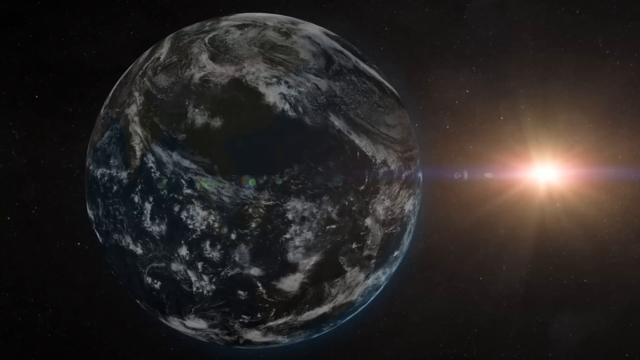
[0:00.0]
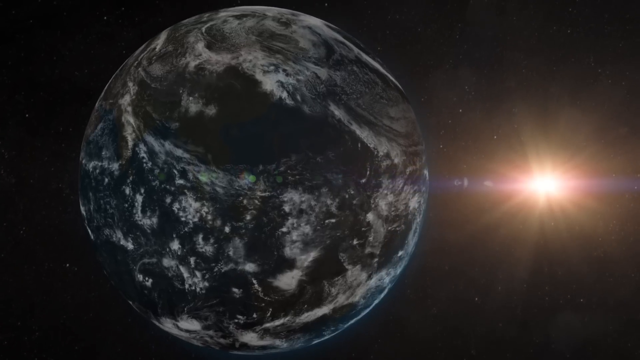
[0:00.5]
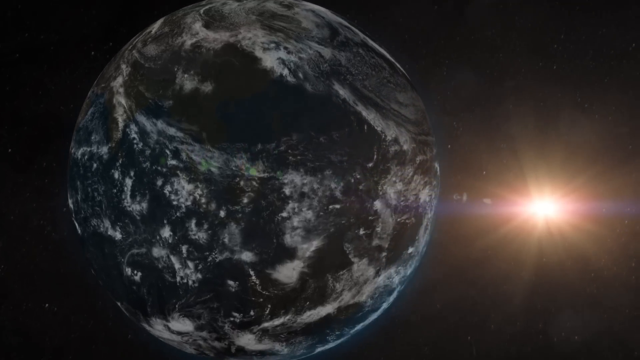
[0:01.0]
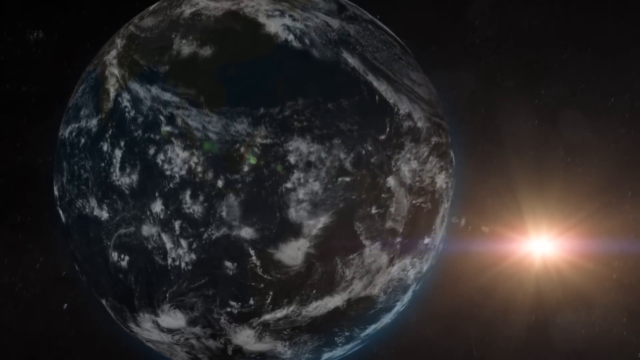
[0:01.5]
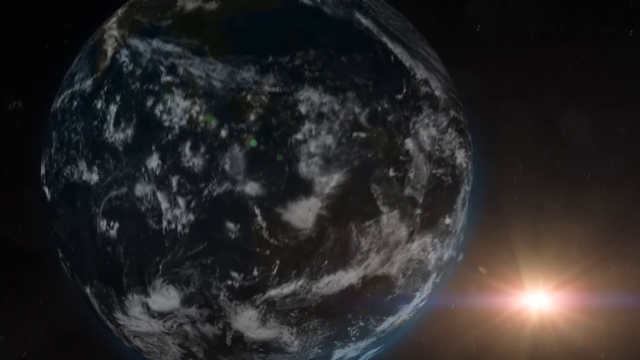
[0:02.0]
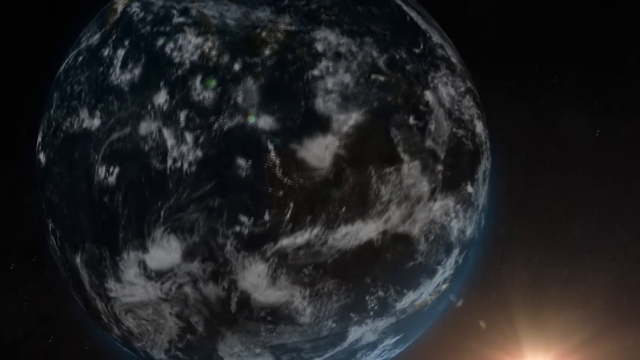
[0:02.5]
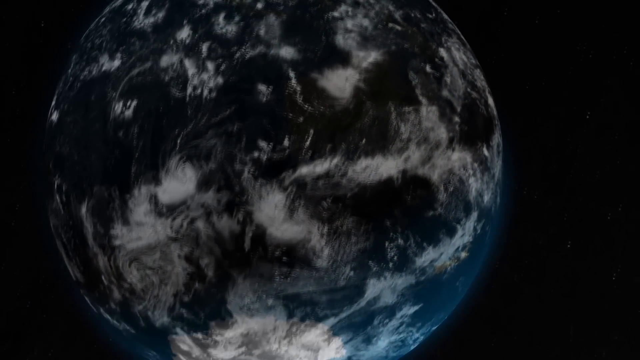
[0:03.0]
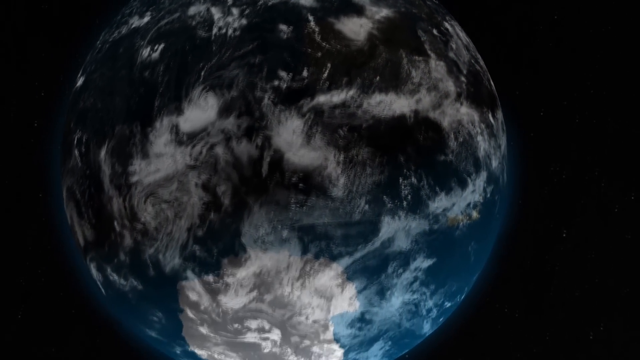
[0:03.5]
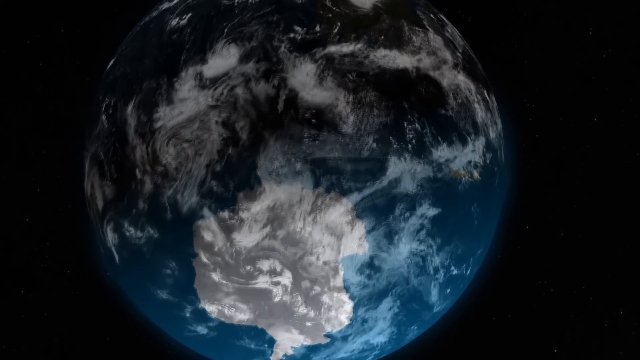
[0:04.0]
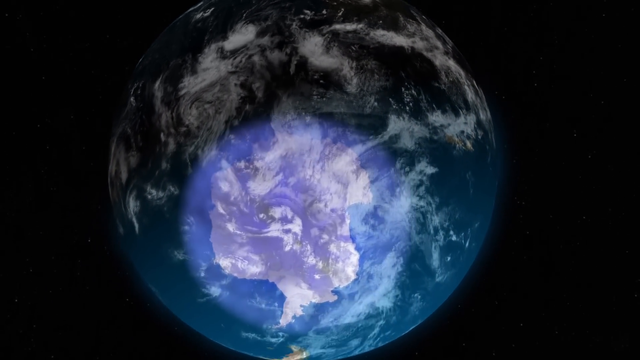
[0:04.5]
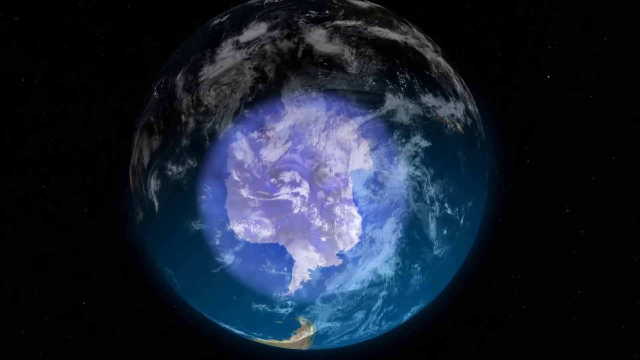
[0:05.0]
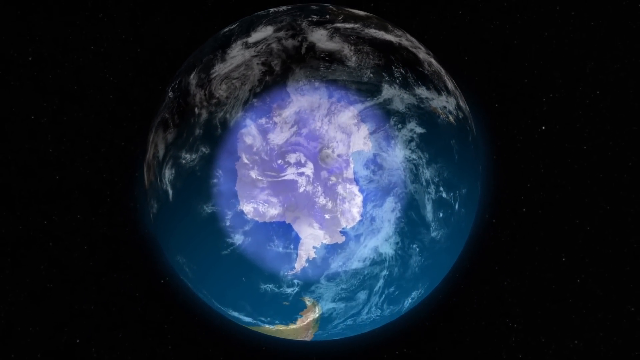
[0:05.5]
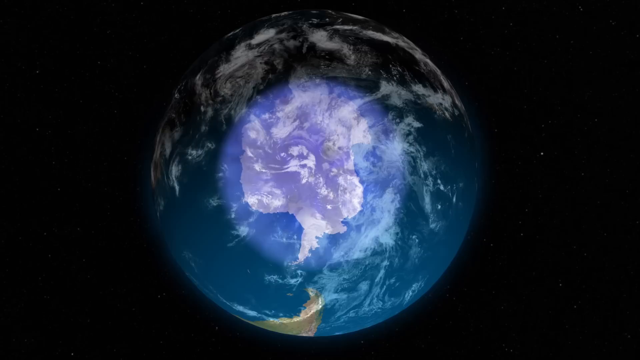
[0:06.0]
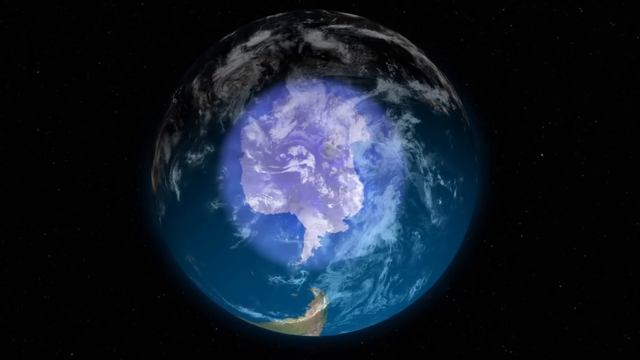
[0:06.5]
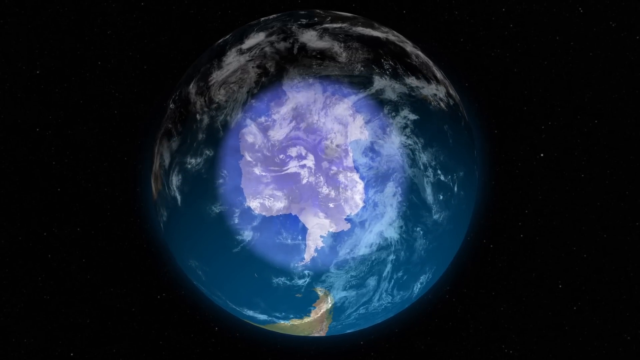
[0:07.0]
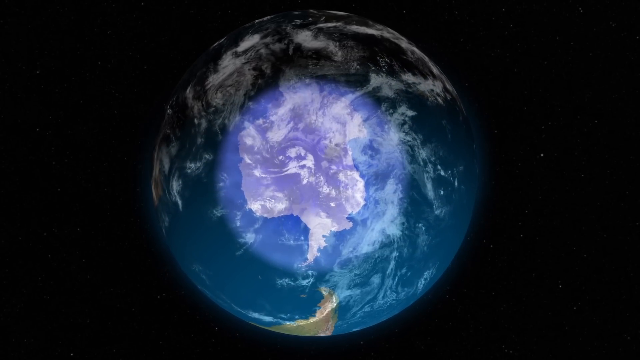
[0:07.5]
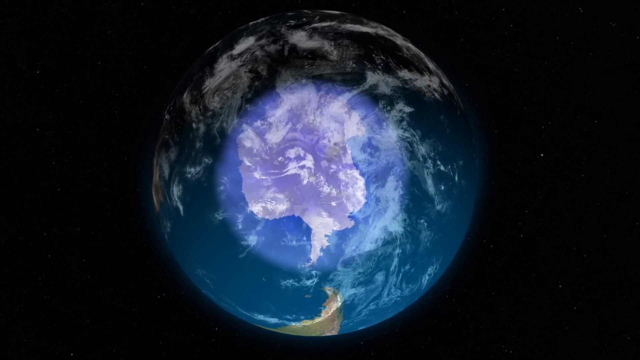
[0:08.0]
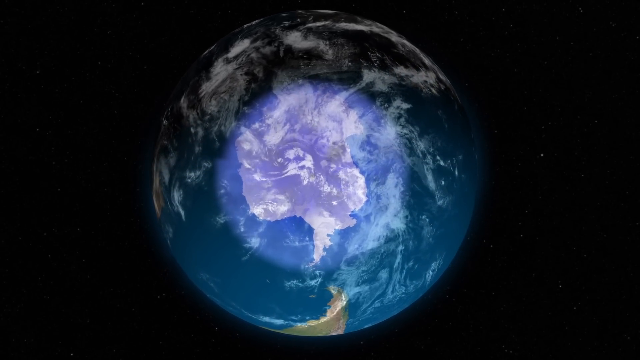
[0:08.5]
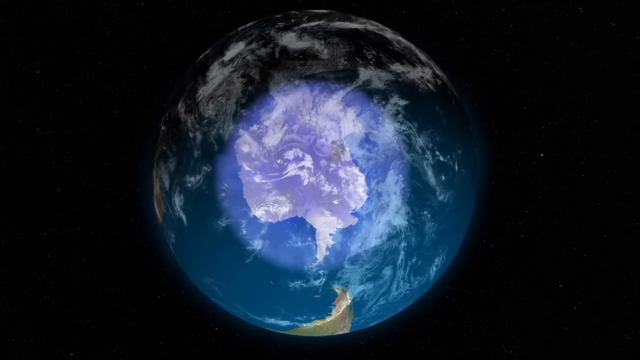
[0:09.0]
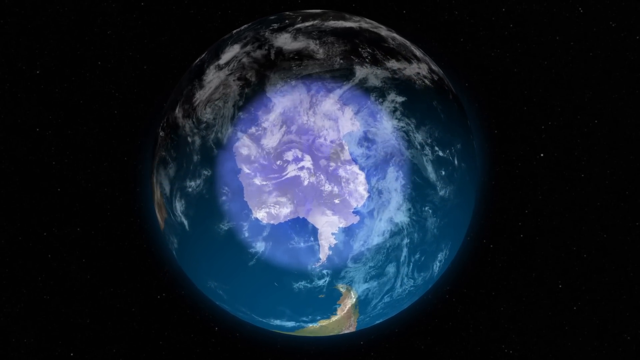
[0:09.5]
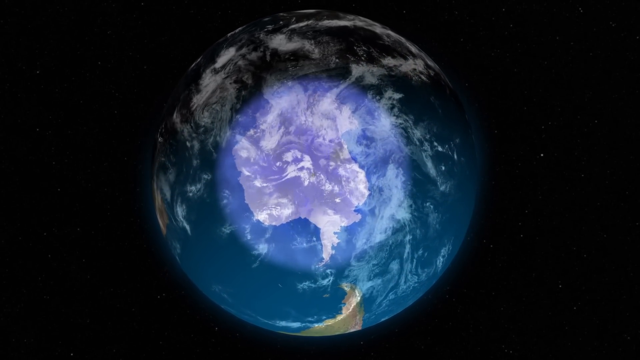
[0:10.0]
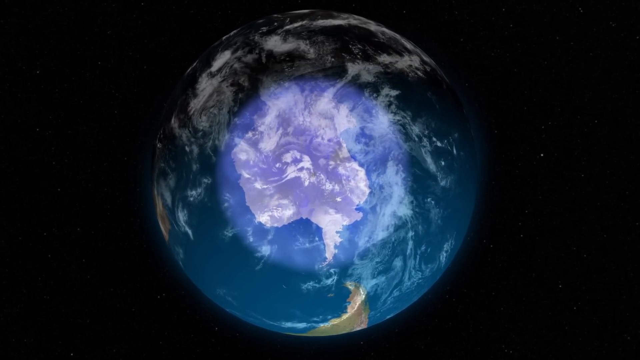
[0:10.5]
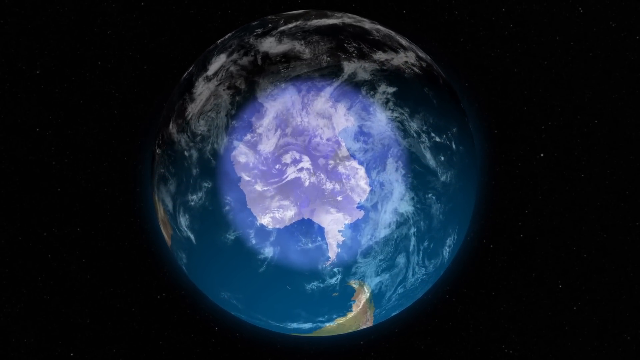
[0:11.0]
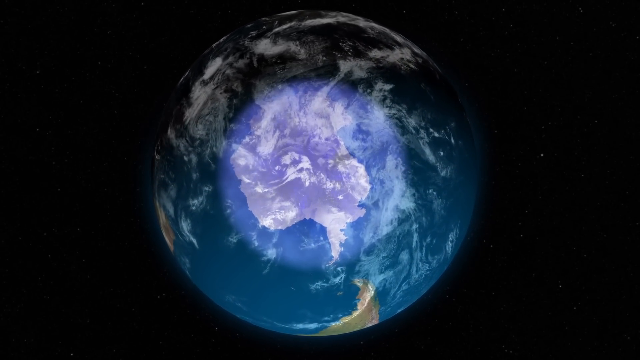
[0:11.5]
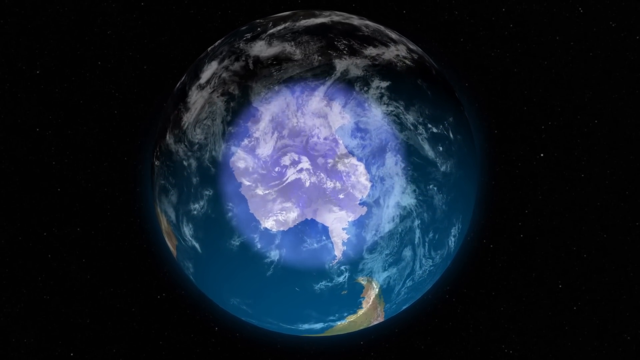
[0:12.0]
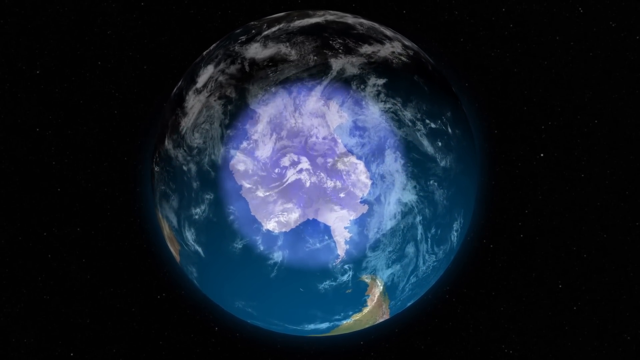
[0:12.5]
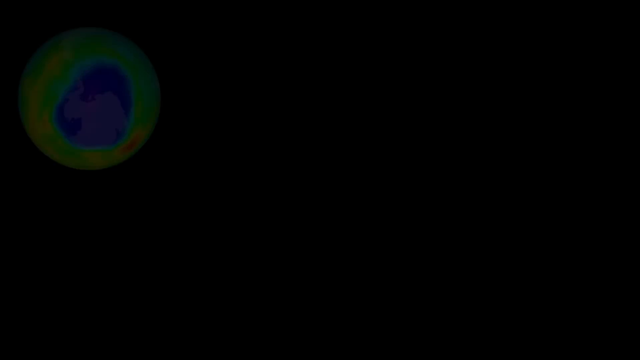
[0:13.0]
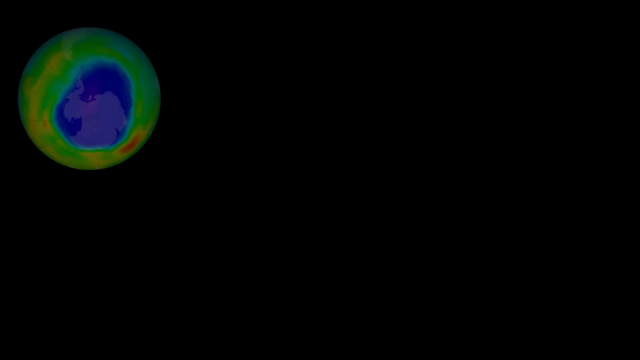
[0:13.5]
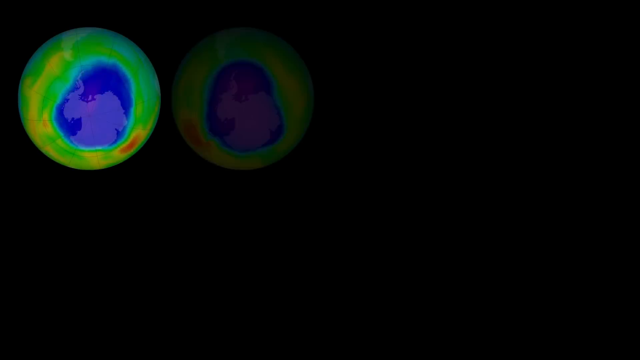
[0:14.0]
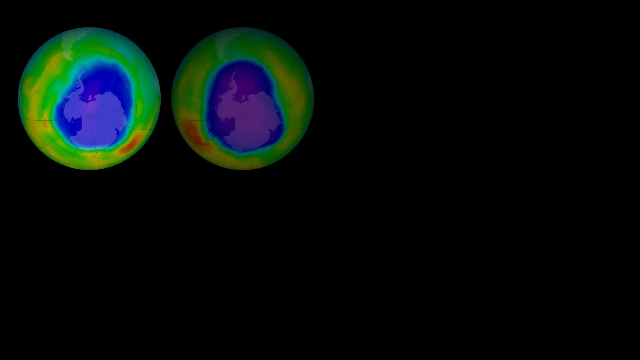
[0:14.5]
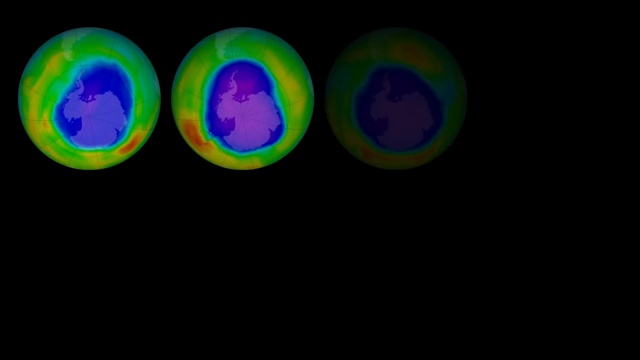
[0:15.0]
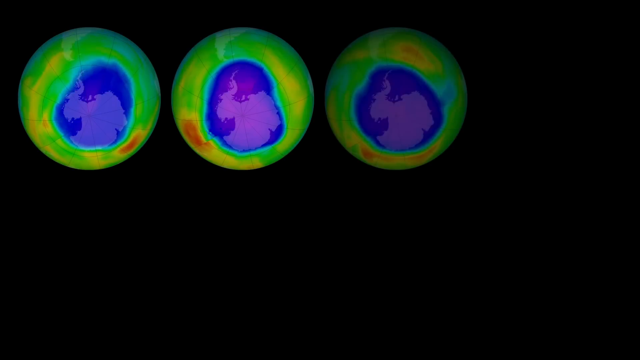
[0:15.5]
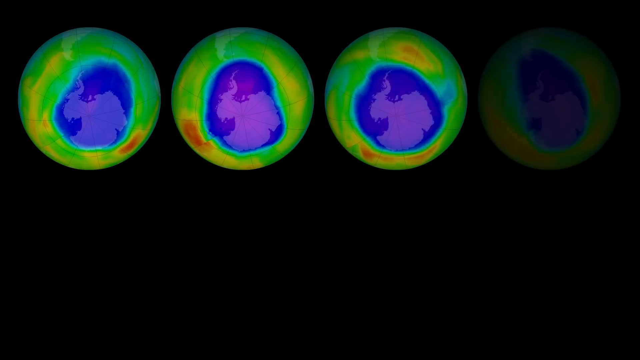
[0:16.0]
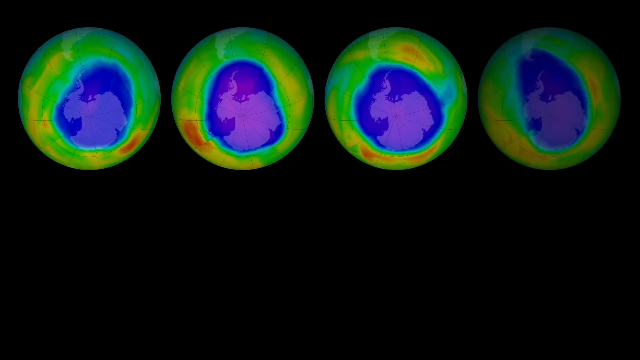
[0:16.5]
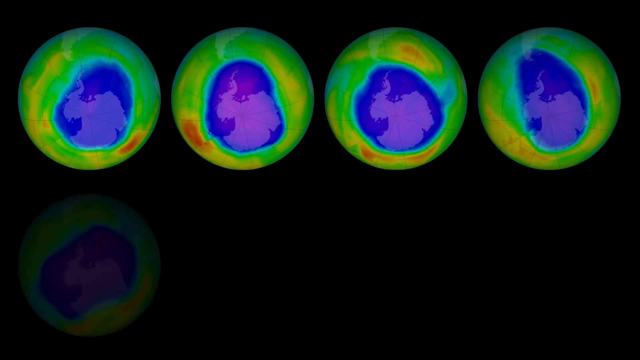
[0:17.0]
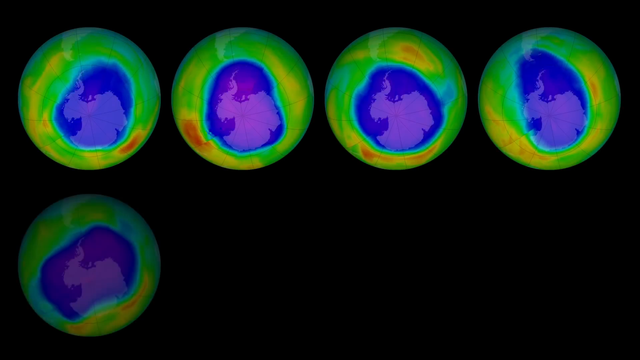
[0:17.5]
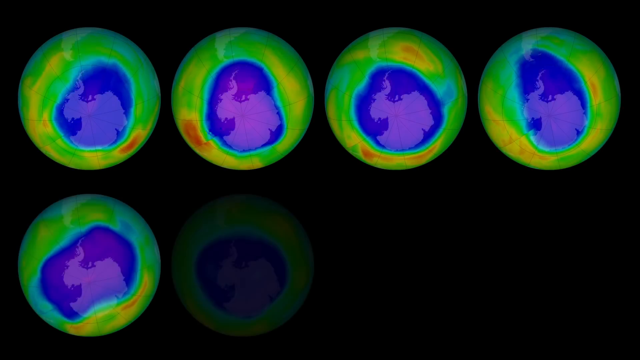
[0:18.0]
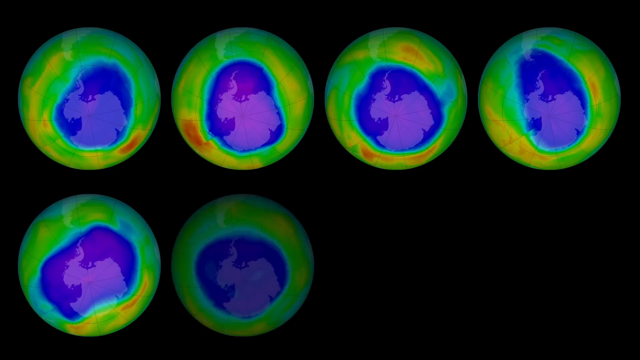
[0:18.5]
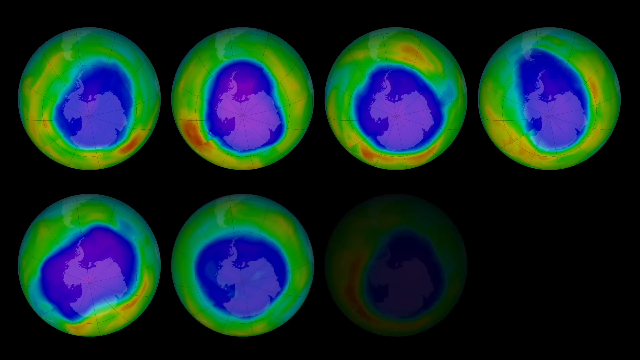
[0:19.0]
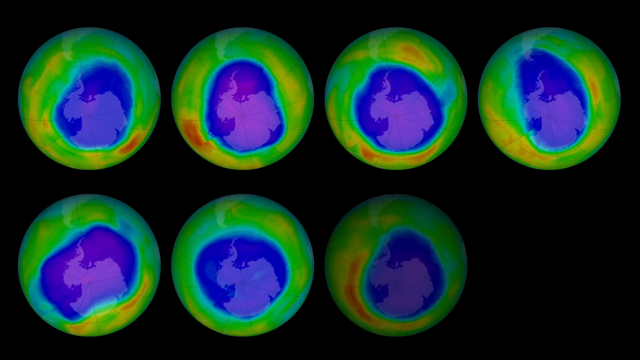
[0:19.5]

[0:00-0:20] Earth appears in outer space among the stars, with a bright red light next to it. The camera slowly zooms in and moves downward to show the bottom of Earth, which then seems to roll over to reveal a blue color, followed by a darker blue that is also bright, with some purple in the center. Earth appears to rotate while the colors in the center rotate as well. Some detail is visible on Earth, in white, blue and some black. Then a black screen appears, and circles with green, yellow, blue and purple blotches pop up one by one until there are eight of them on the screen.